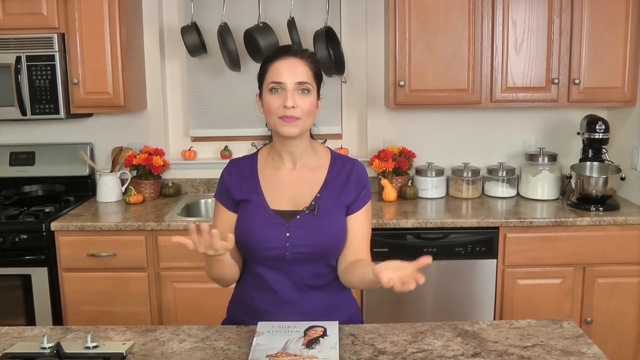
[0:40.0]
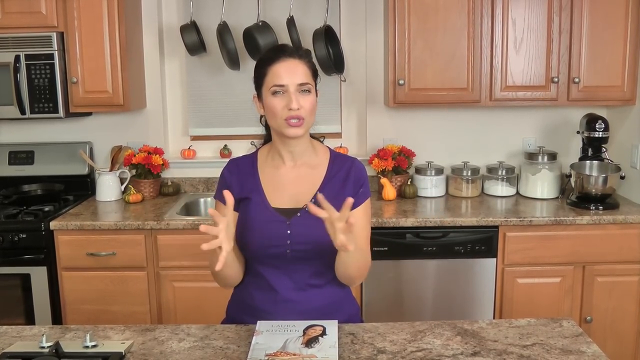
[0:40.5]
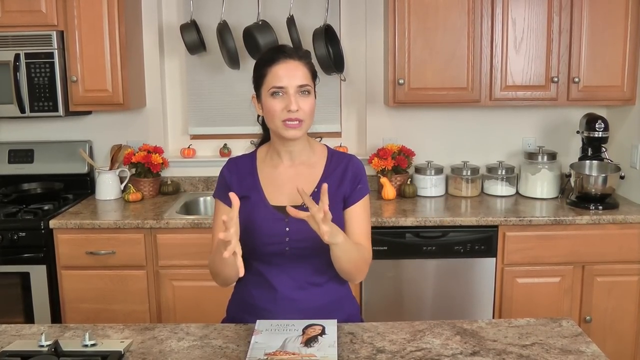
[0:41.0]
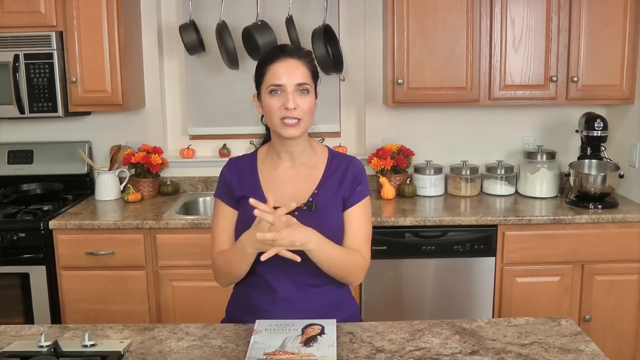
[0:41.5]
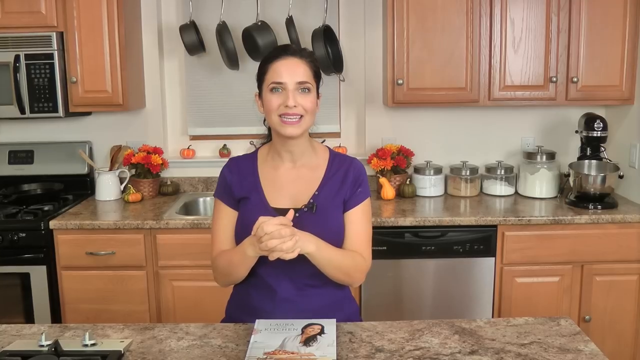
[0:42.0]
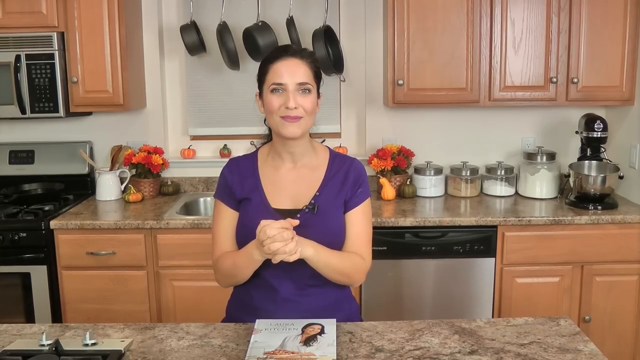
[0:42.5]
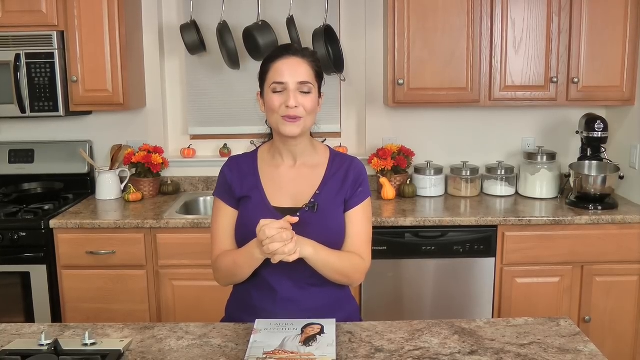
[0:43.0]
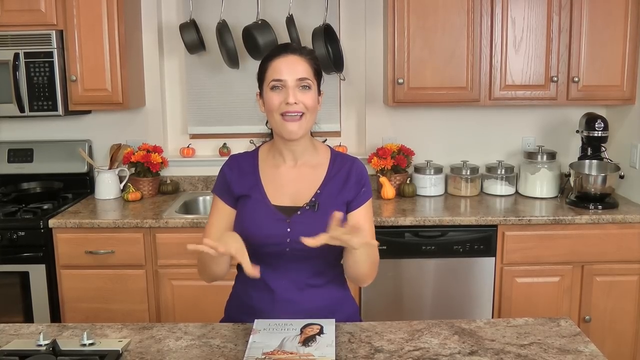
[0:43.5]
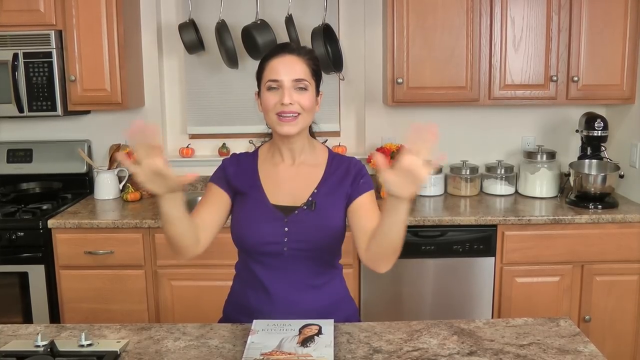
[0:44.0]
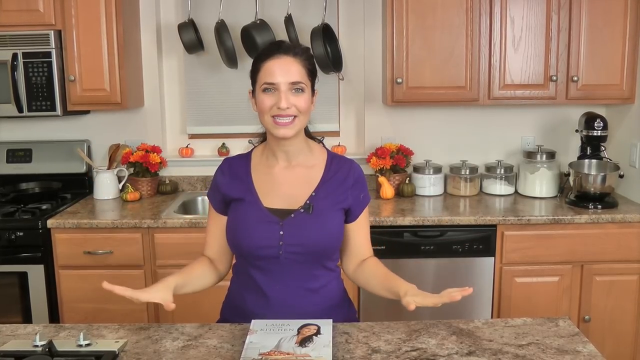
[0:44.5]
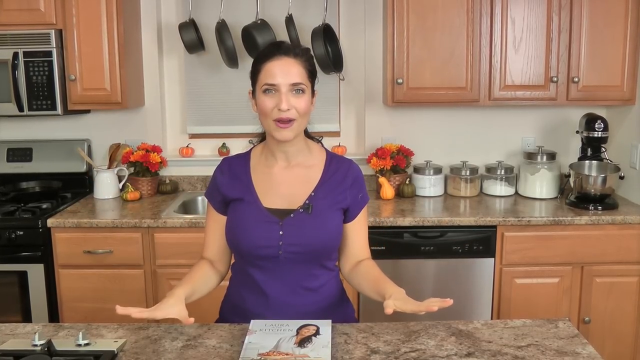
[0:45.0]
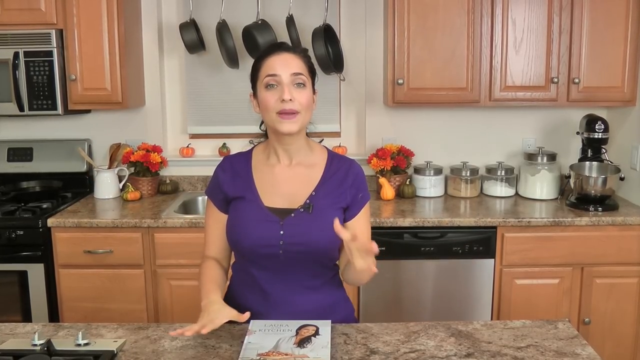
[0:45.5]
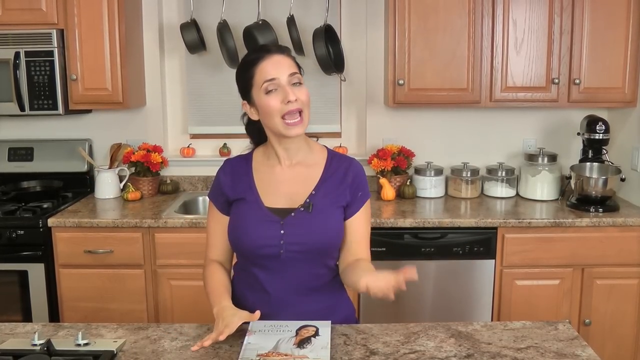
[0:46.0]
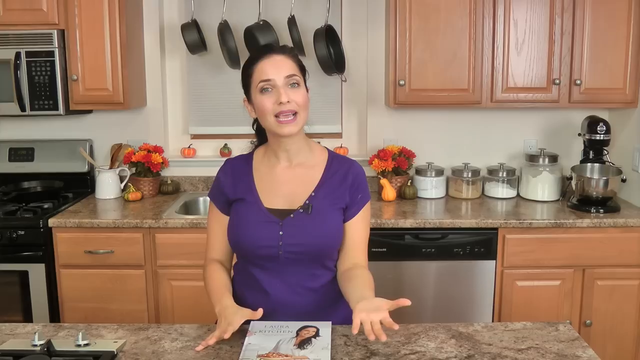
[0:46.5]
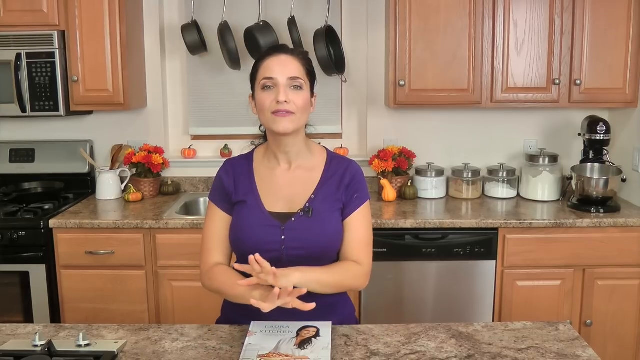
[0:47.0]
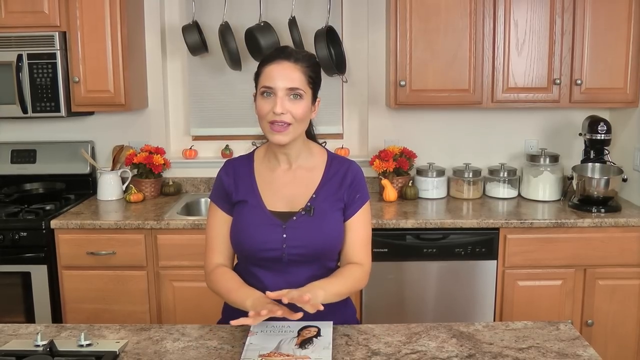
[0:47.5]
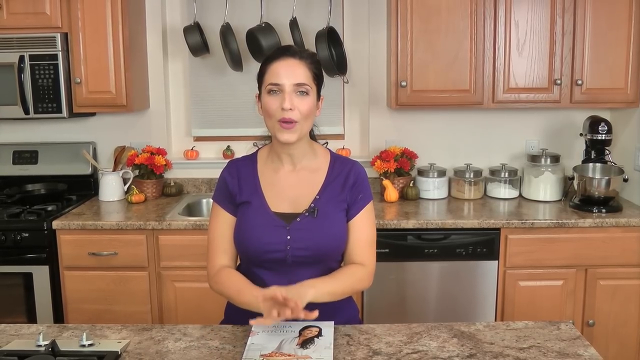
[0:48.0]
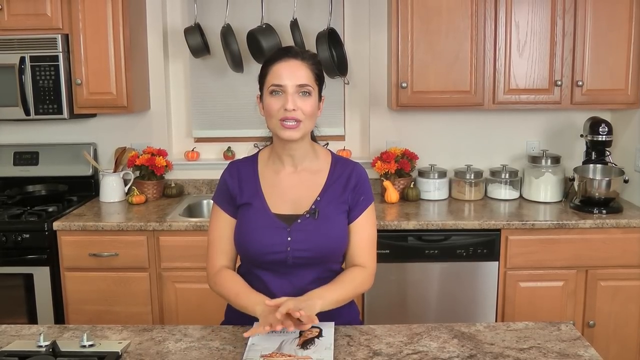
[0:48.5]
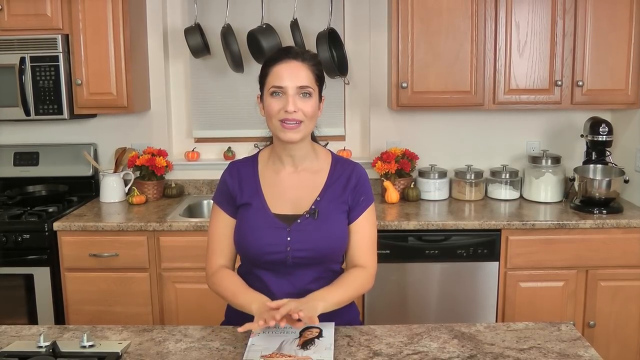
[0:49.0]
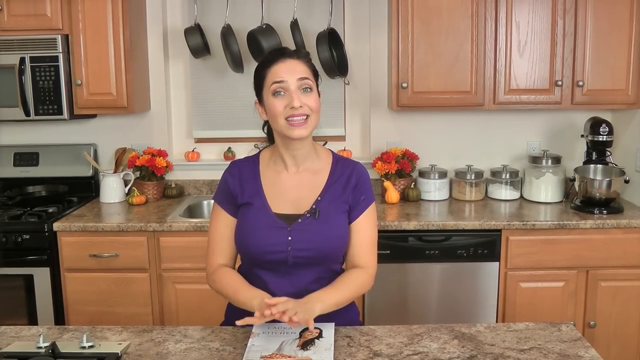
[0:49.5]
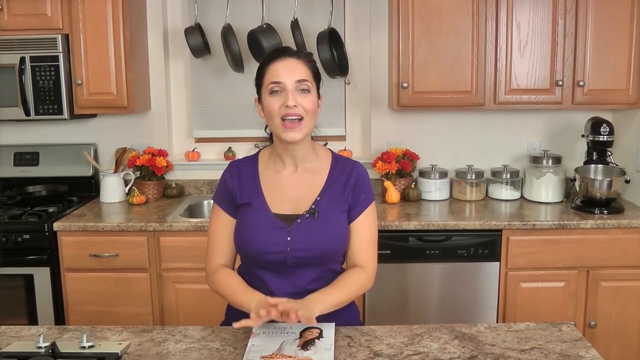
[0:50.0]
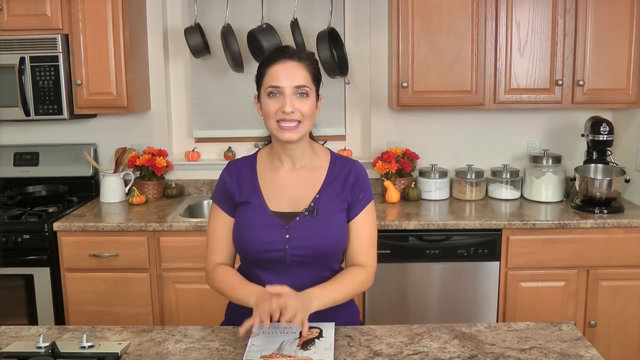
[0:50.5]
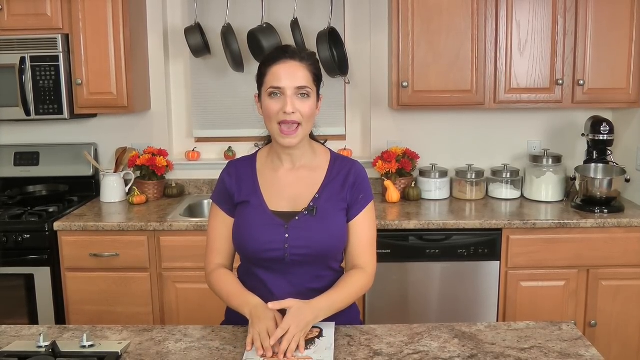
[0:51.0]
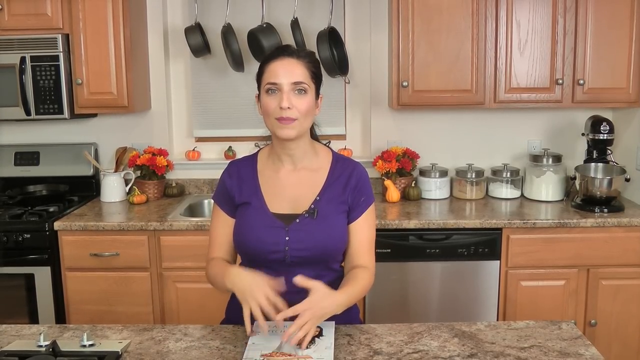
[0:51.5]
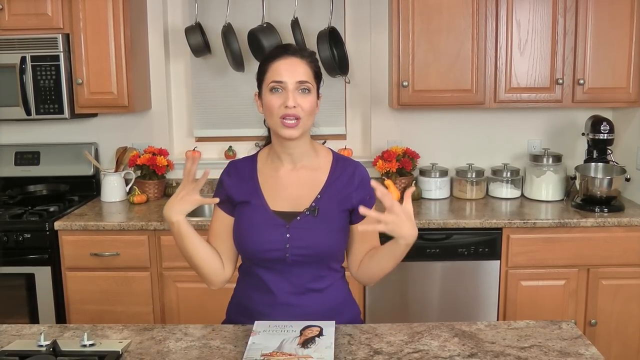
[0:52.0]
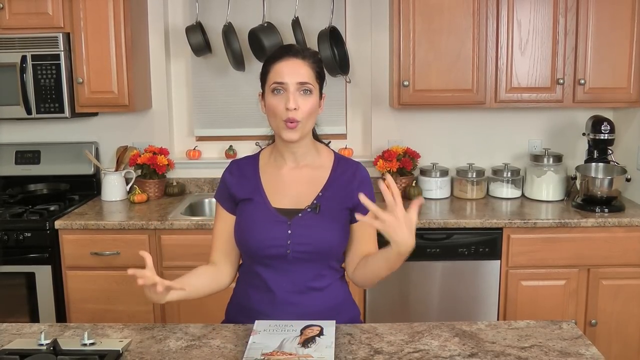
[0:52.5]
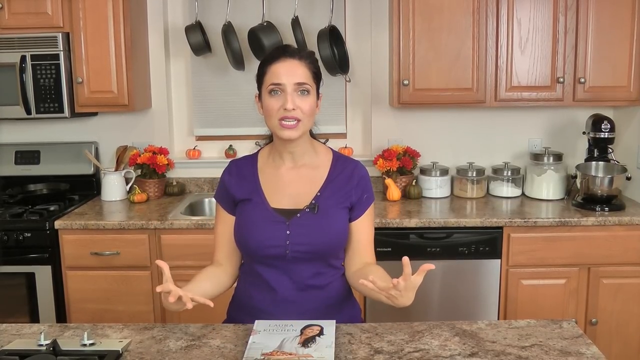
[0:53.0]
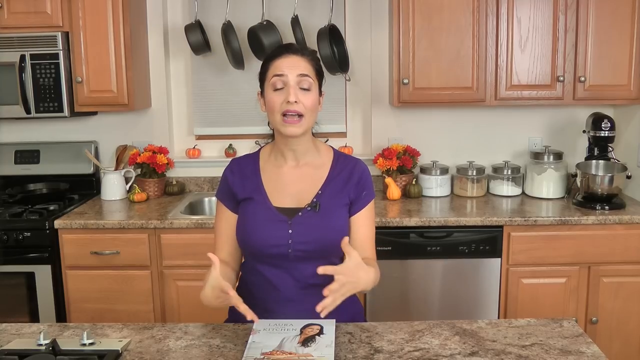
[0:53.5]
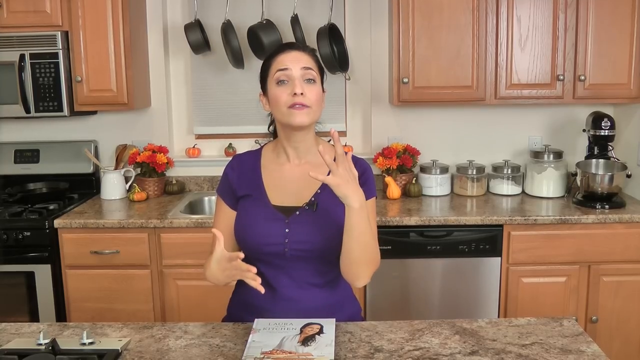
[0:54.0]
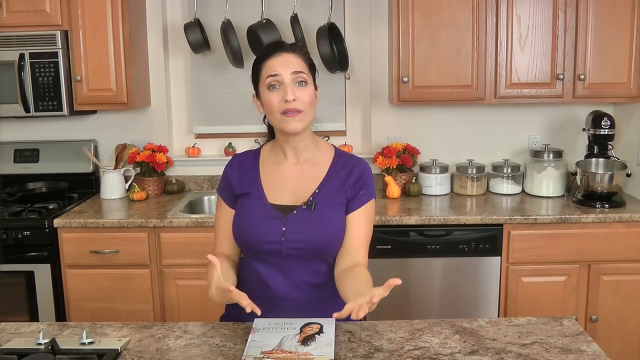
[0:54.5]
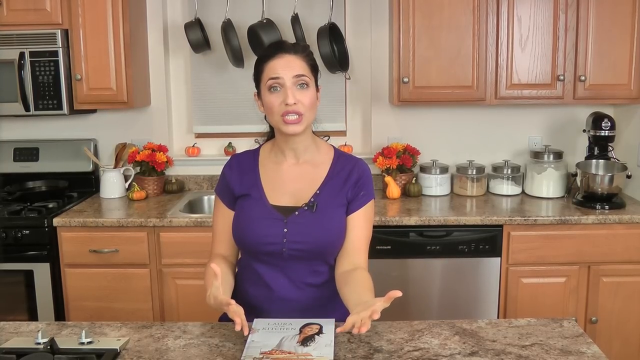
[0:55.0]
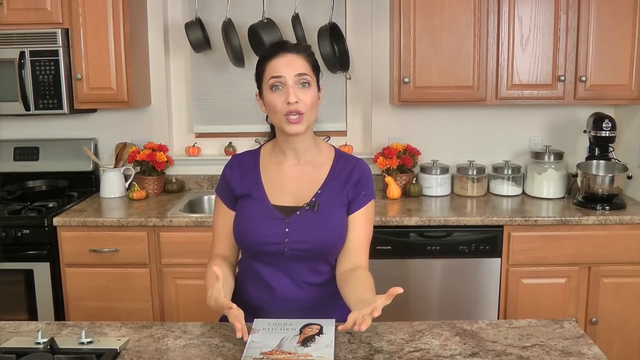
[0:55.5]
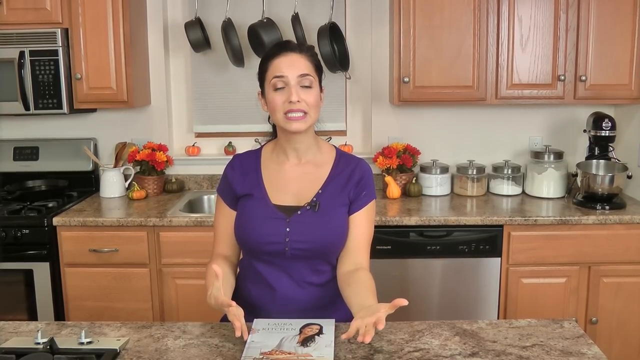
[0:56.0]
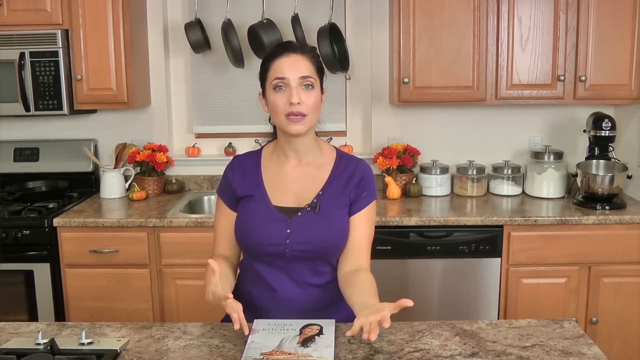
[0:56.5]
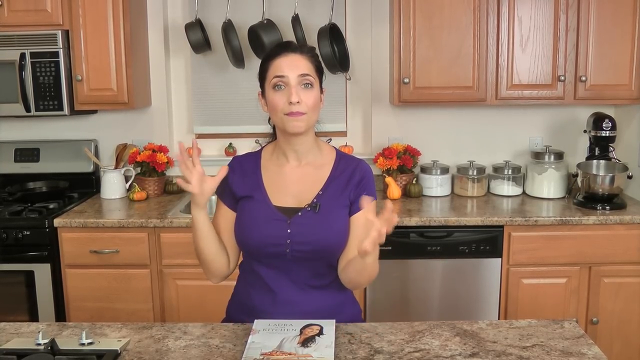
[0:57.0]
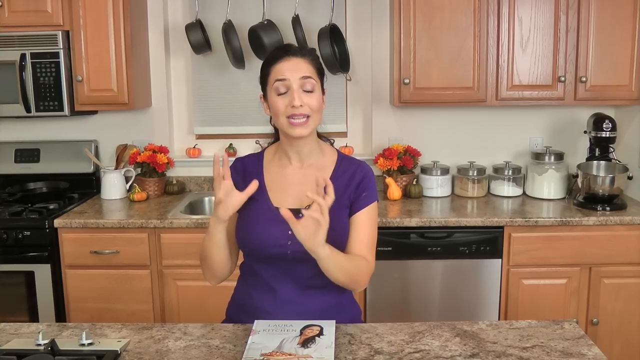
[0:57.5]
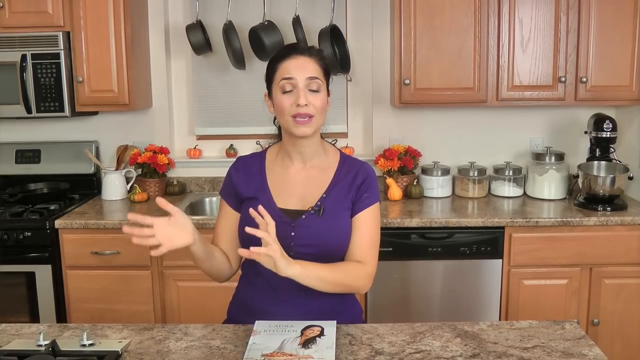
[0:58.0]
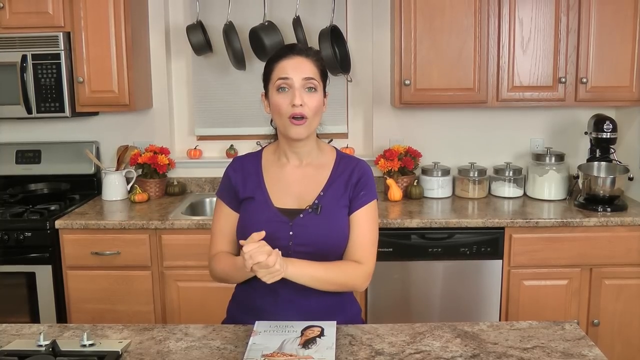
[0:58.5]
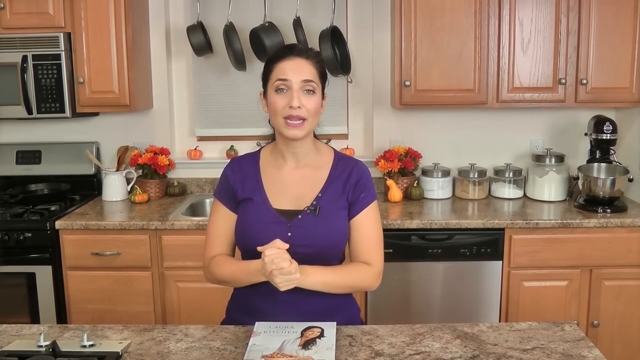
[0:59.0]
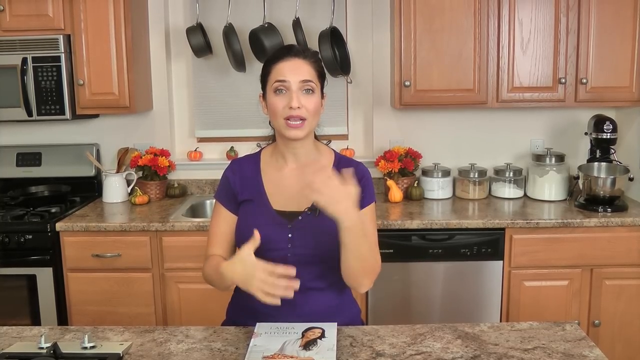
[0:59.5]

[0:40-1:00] A white woman with black hair tied at the back wears a purple top with small white patterns and some black visible on it. She talks while gesturing with her hands and smiles, with lipstick on. The kitchen behind her has spices on the table, a mixing machine, decorative flowers, a stove, a microwave, hanging pans, a window, a pumpkin decoration, and a dishwasher. A sink is behind her, and the cupboards at the back are brown and made of wood, with handles for opening them. In front of her is another table with a book on it. She keeps talking while facing the camera.